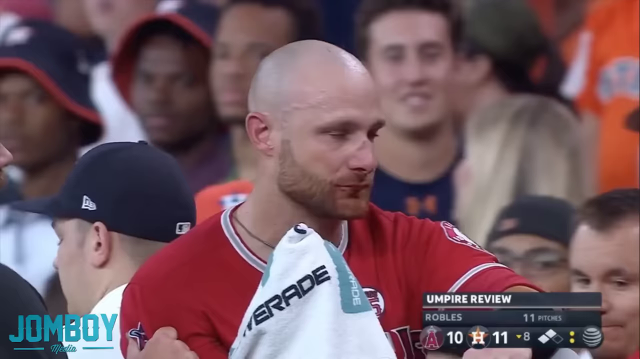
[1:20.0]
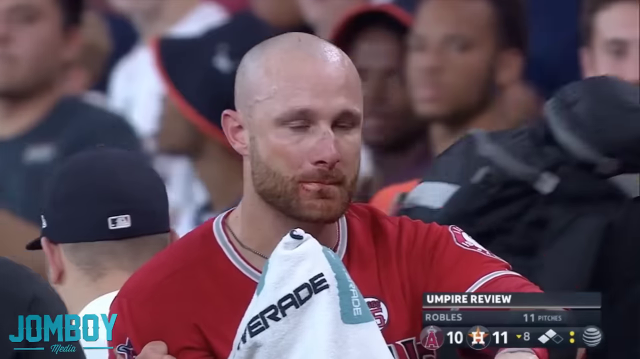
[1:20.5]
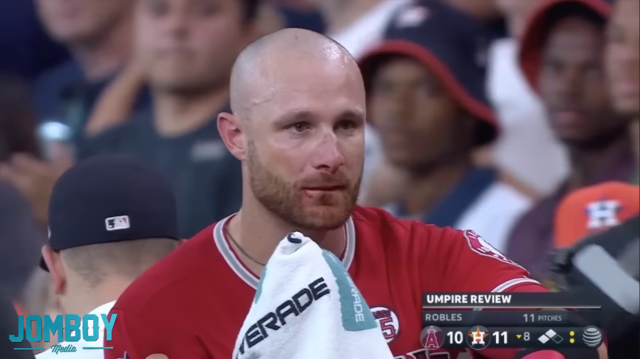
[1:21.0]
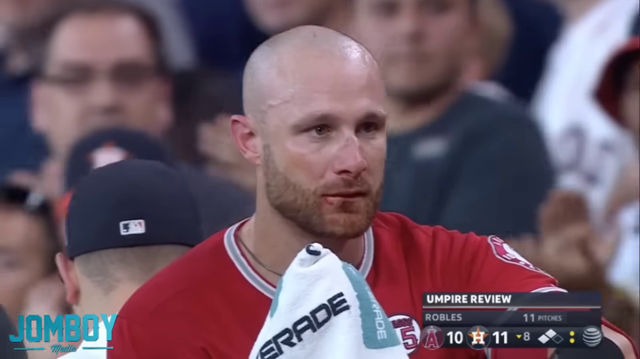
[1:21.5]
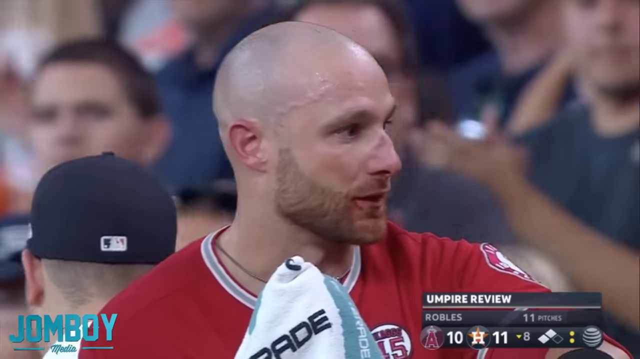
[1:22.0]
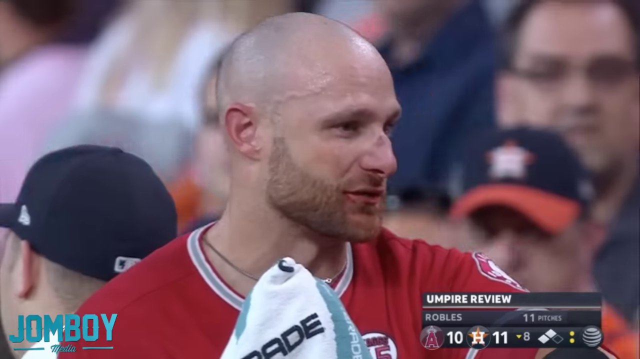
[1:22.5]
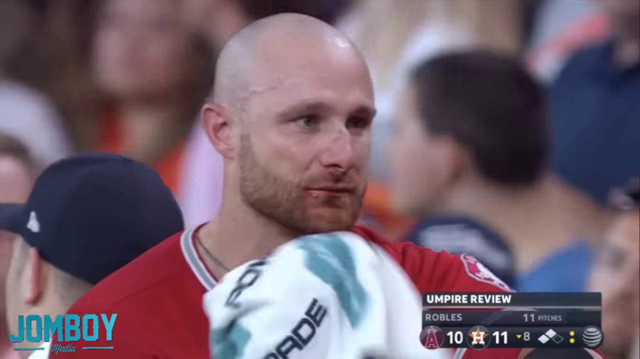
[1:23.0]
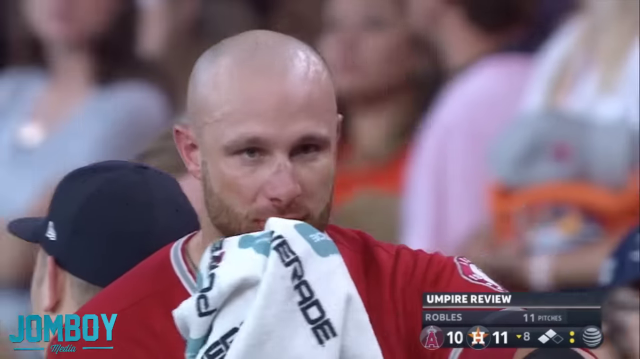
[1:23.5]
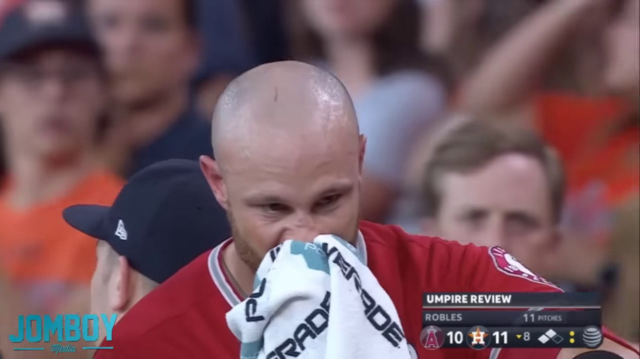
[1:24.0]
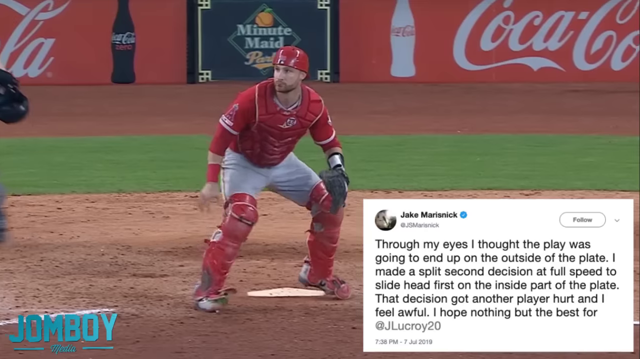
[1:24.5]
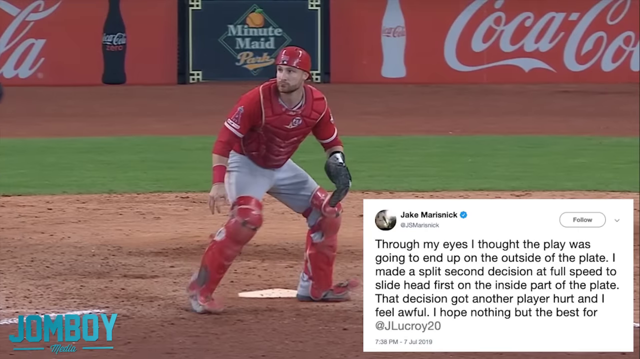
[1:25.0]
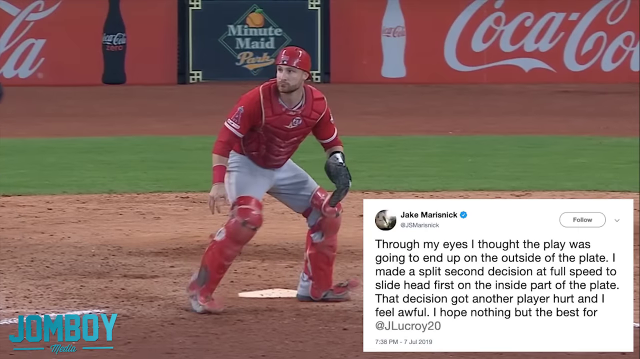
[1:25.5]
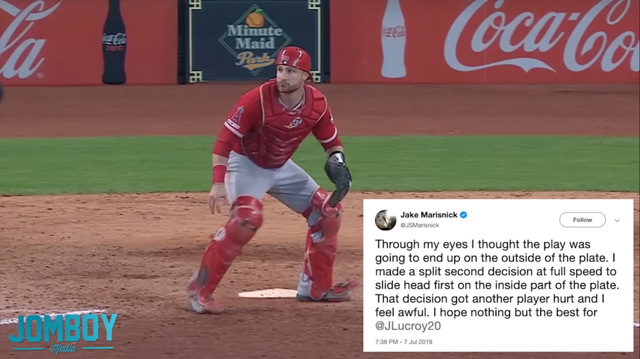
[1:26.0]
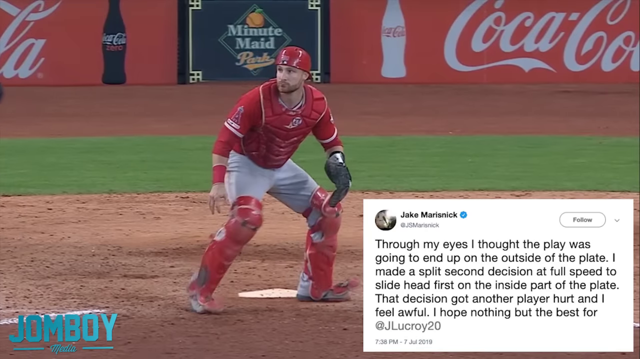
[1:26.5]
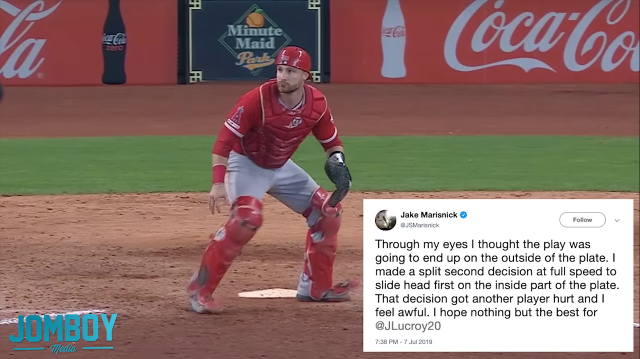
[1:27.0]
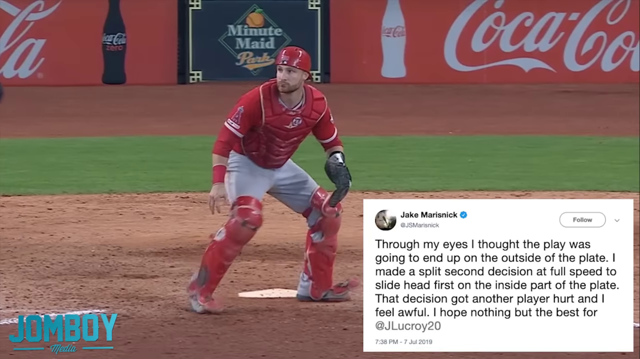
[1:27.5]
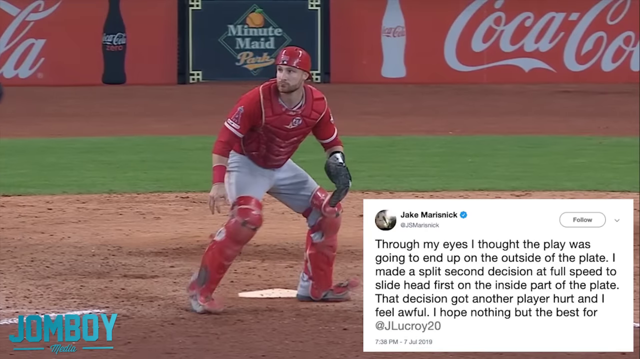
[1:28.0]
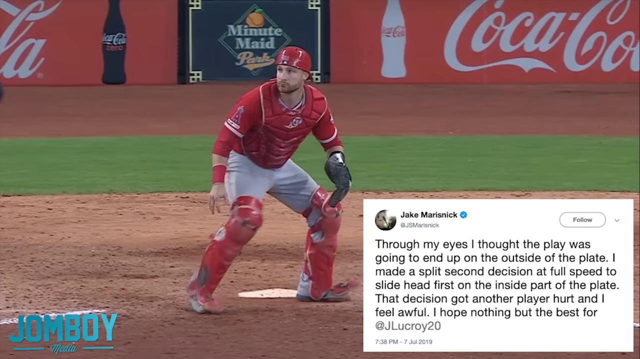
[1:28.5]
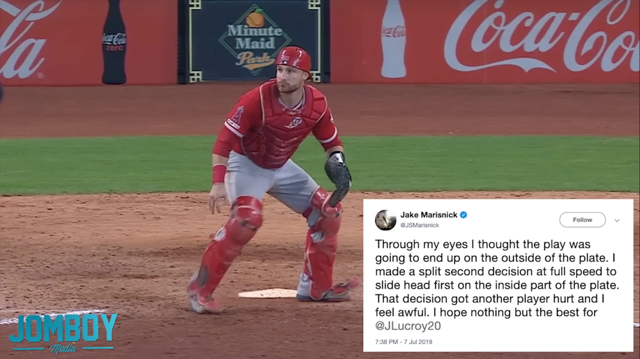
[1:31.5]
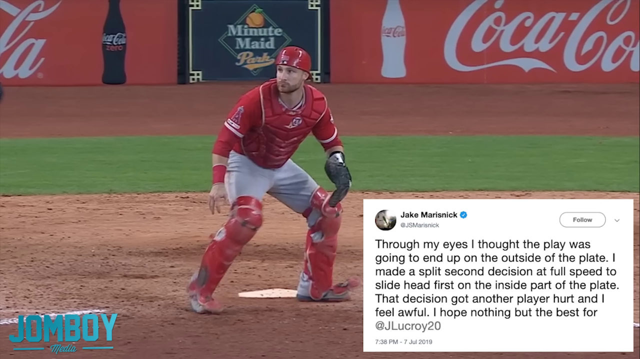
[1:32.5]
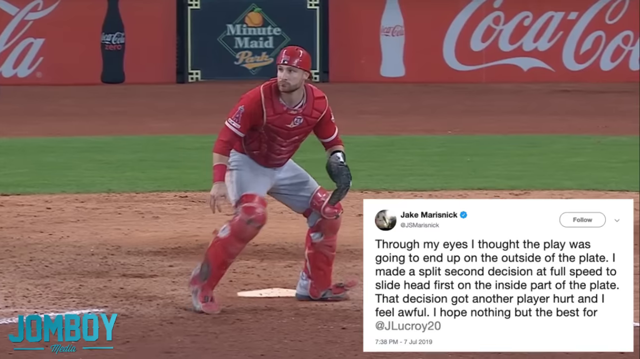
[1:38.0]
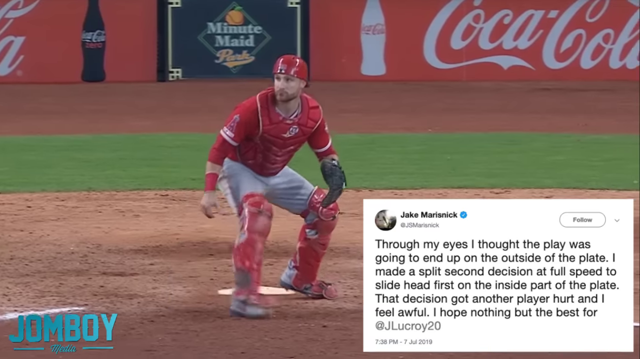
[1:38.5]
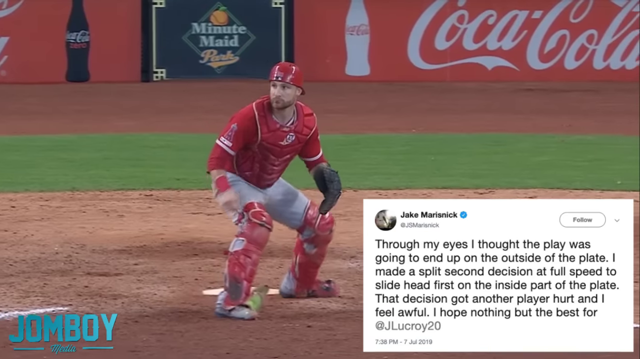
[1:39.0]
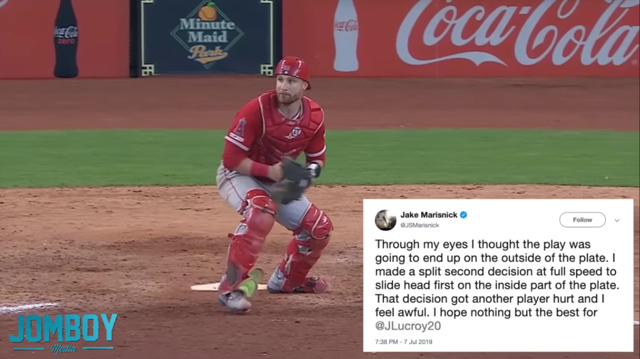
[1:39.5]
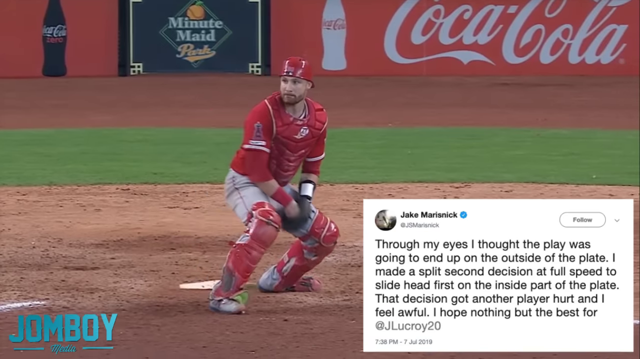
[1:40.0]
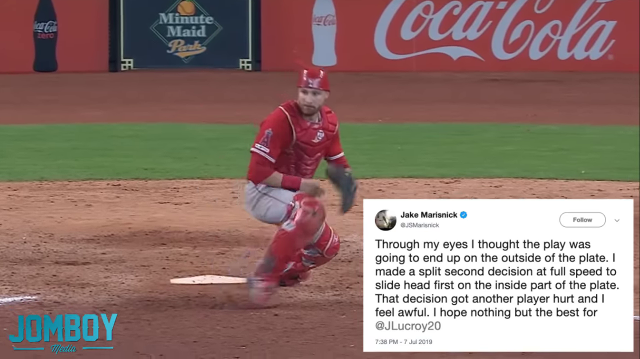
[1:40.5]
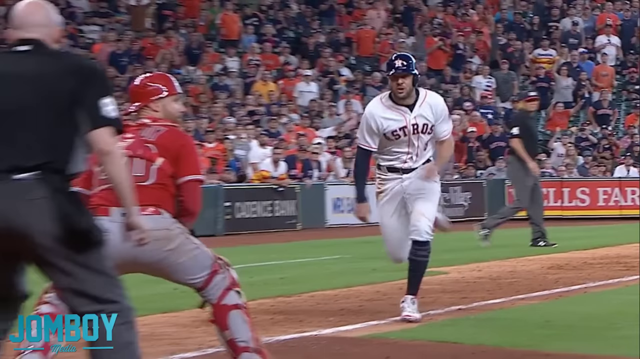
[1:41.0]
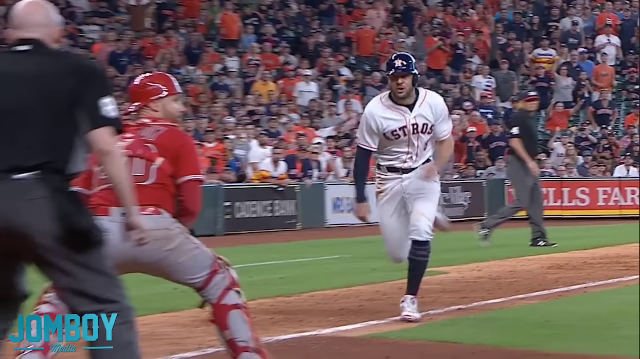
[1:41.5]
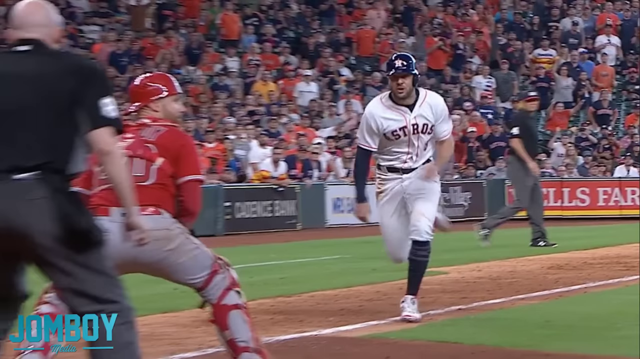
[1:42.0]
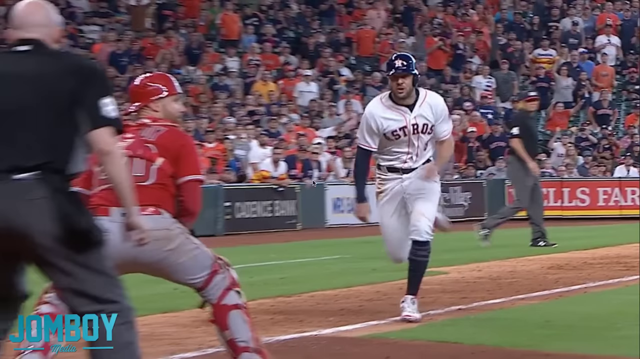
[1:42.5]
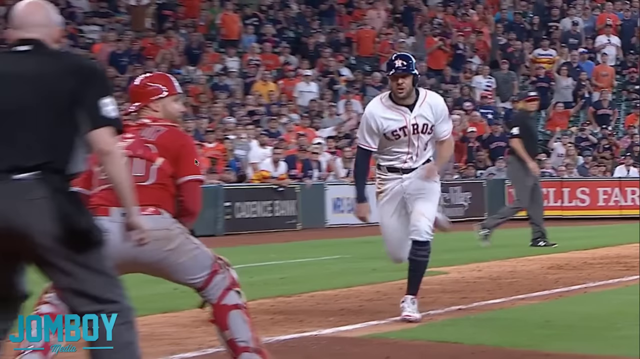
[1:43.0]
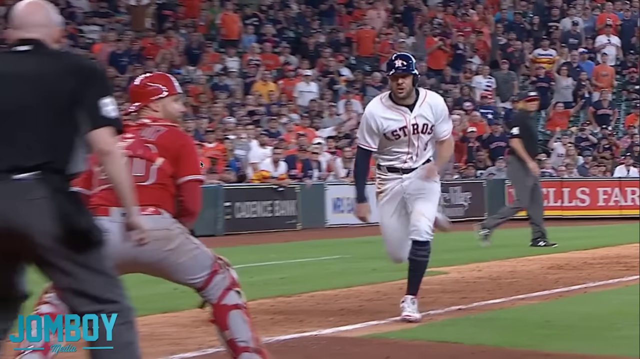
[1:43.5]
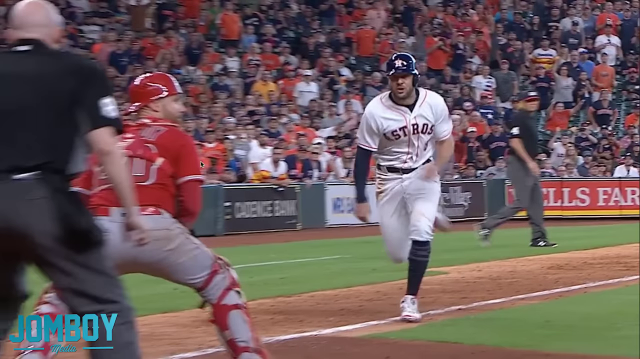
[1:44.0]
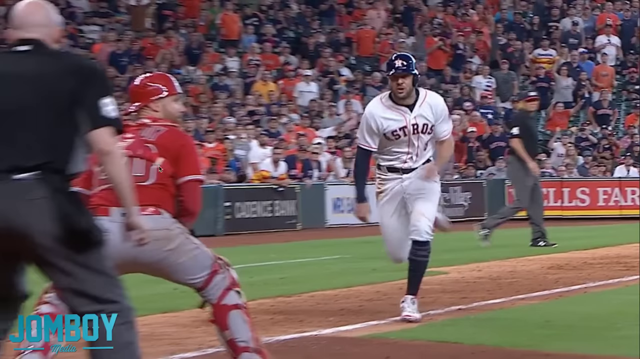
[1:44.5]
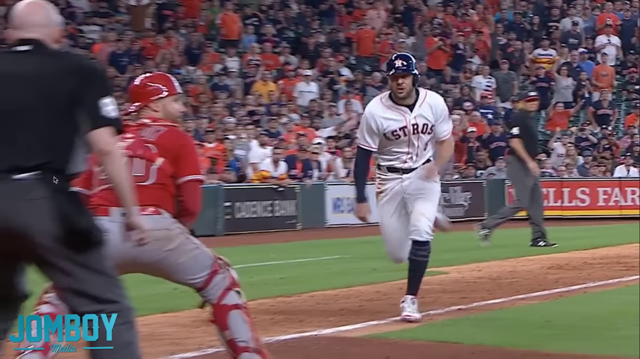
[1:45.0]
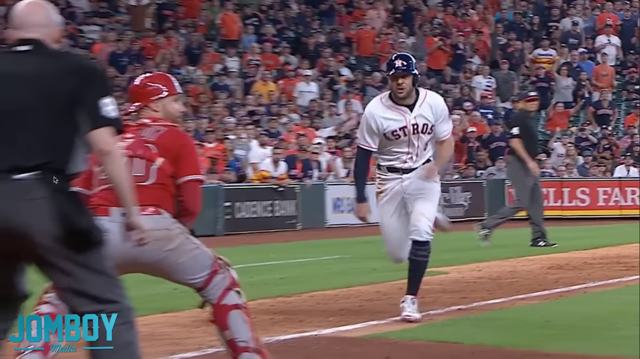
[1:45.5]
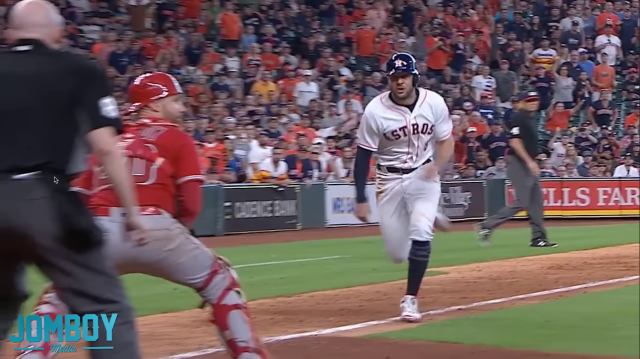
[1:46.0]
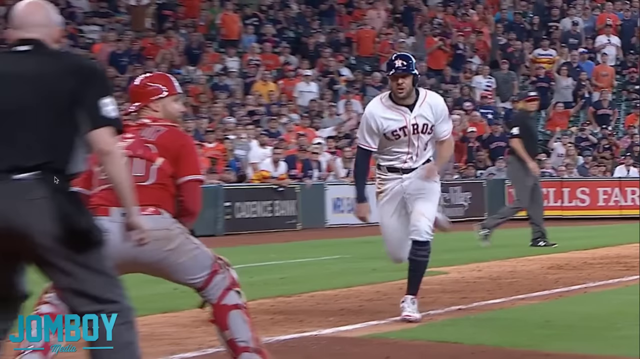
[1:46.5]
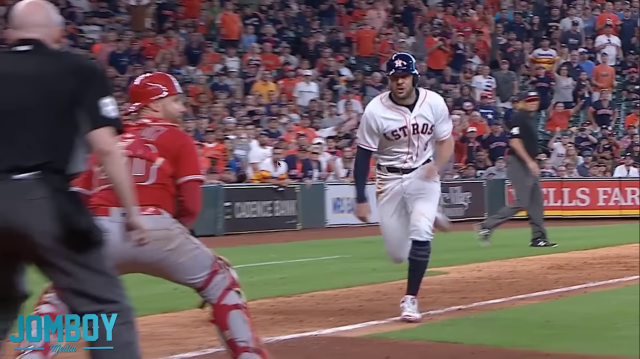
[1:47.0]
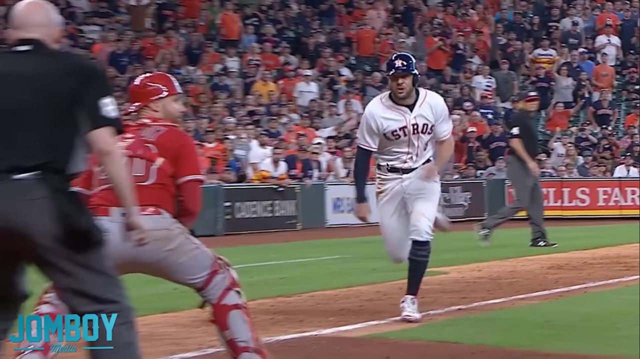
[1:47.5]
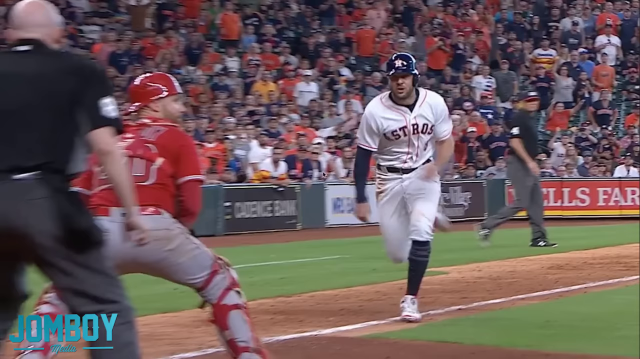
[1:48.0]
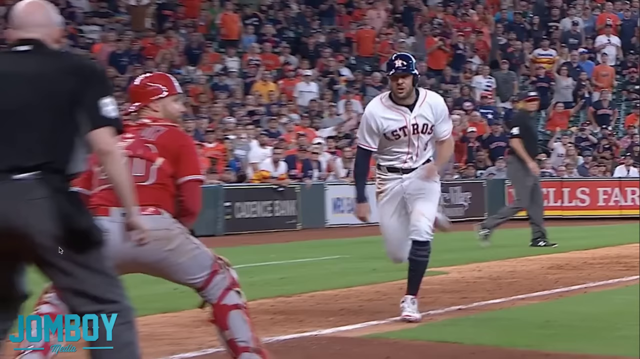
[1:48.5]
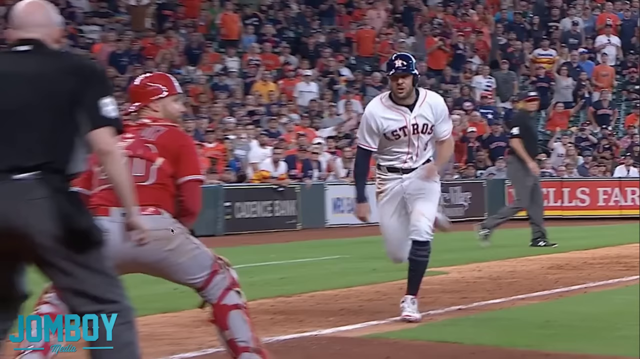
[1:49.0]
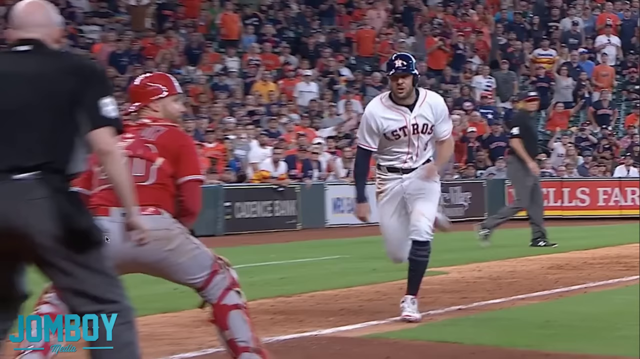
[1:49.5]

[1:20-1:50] In the back of the first aid vehicle, one person sits with the injured player, another holds onto his arm, and two people are in the front. The player apparently has a bleeding nose; he holds onto tissue, there is blood on his face, and his nose is red and looks broken. On-screen text shows a quote Jake left on Twitter: "through my eyes, I thought the play was going to end up on the outside of the plate. I made a split decision at full speed to slide head first on the inside part of the plate, that decision got another player hurt and I feel awful, I hope nothing but the best for", followed by an @ handle of the injured player. The message is from the player who collided with him.